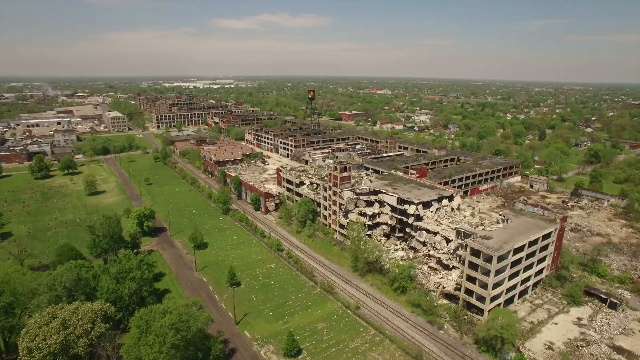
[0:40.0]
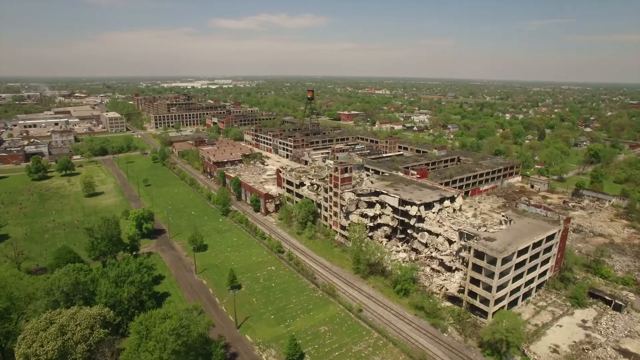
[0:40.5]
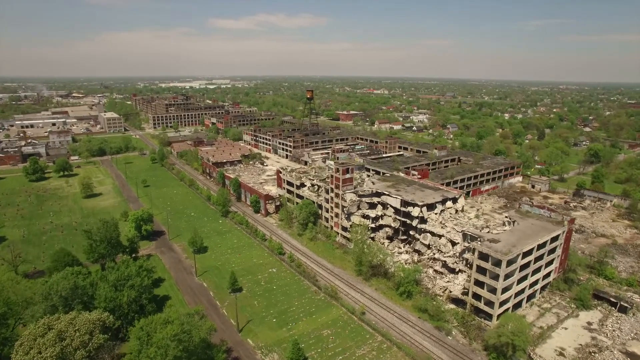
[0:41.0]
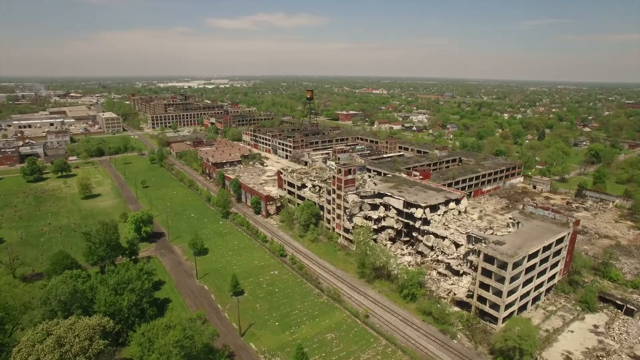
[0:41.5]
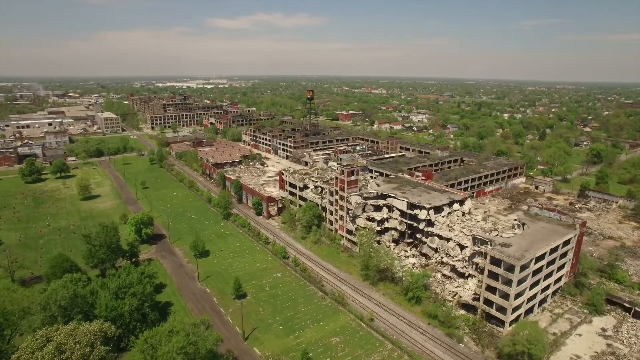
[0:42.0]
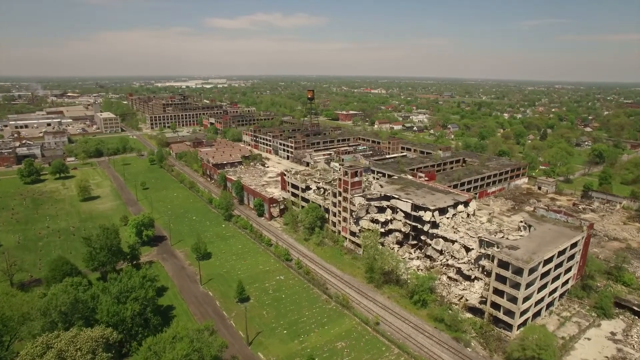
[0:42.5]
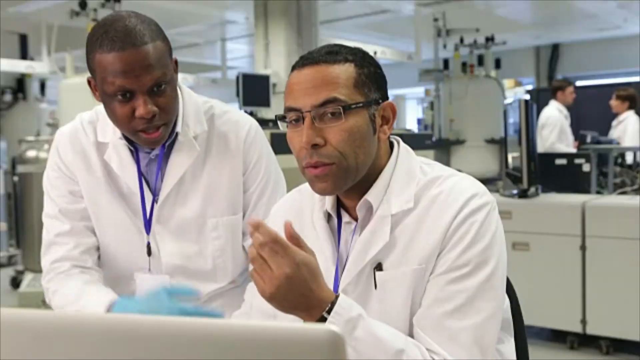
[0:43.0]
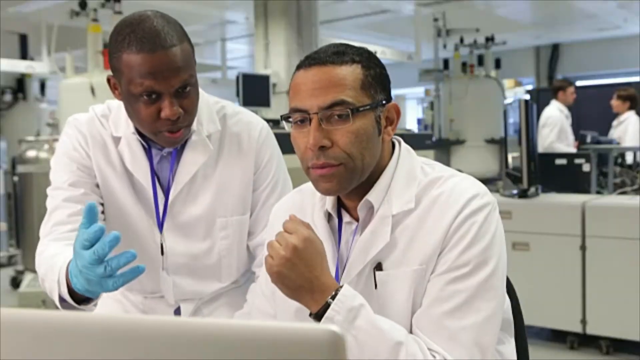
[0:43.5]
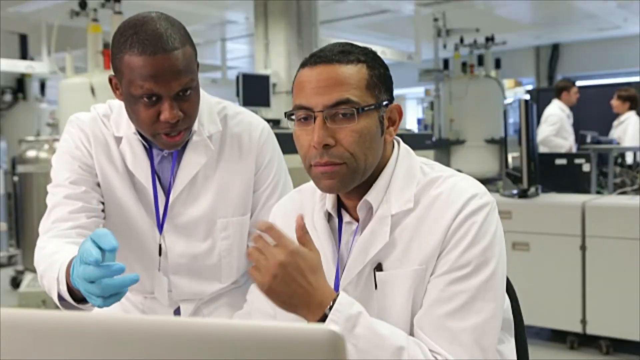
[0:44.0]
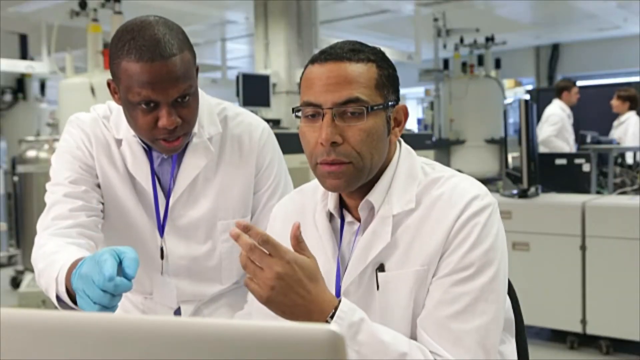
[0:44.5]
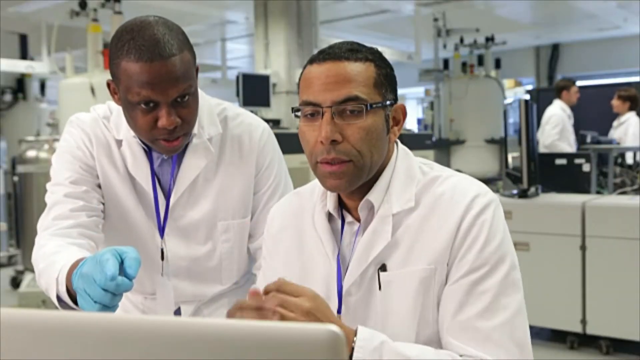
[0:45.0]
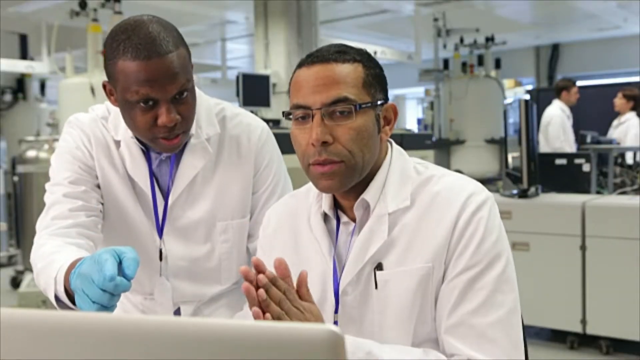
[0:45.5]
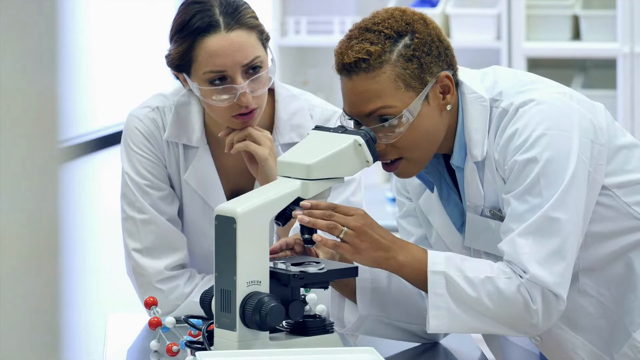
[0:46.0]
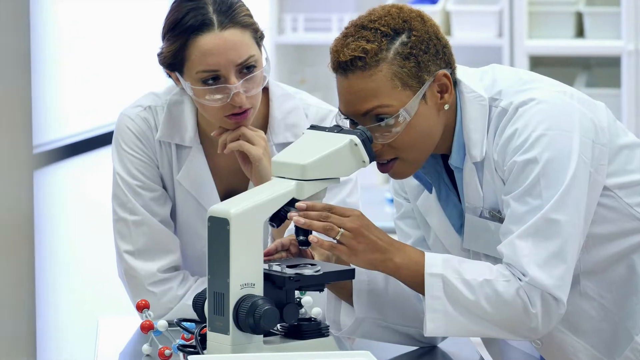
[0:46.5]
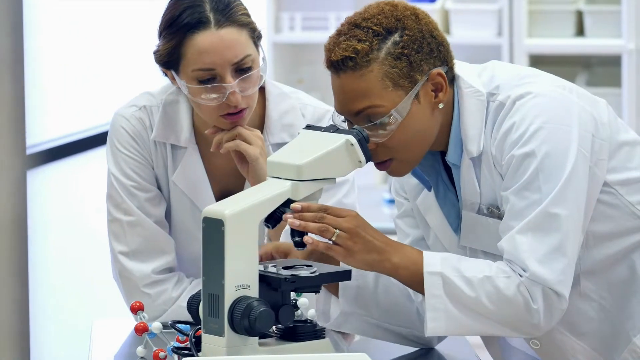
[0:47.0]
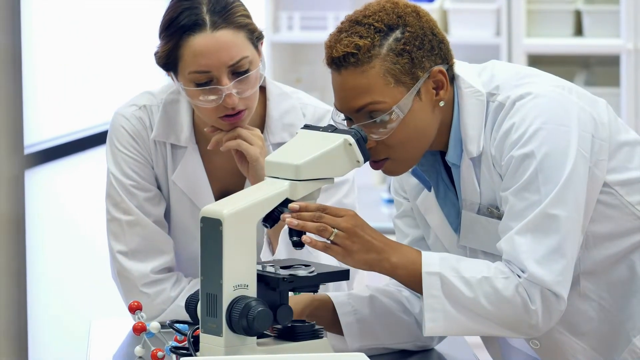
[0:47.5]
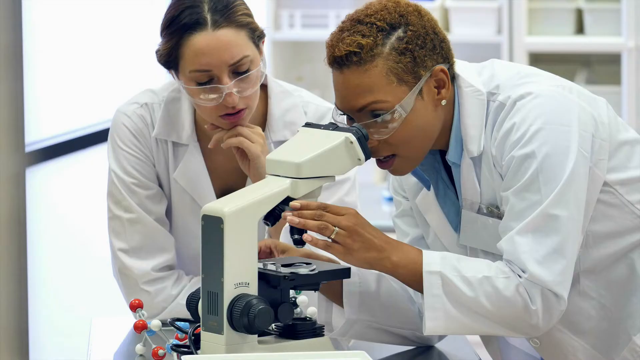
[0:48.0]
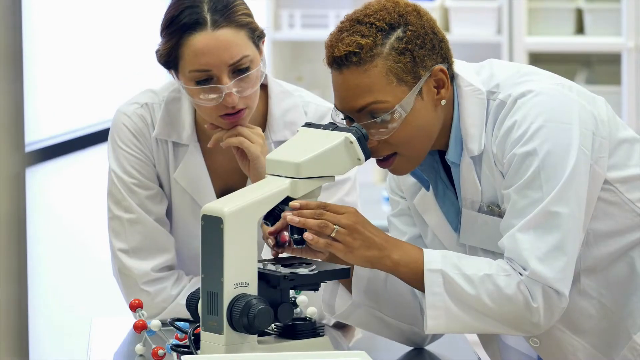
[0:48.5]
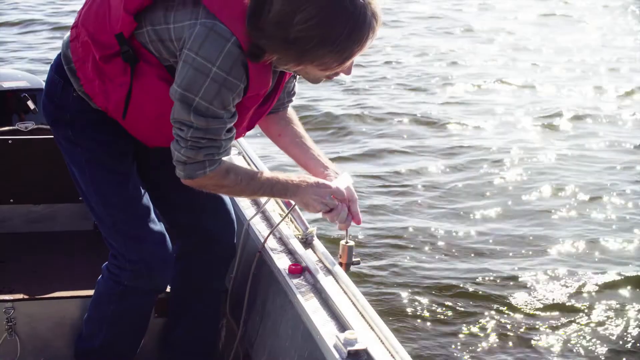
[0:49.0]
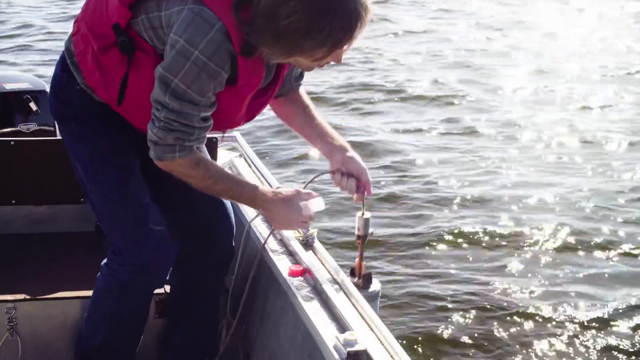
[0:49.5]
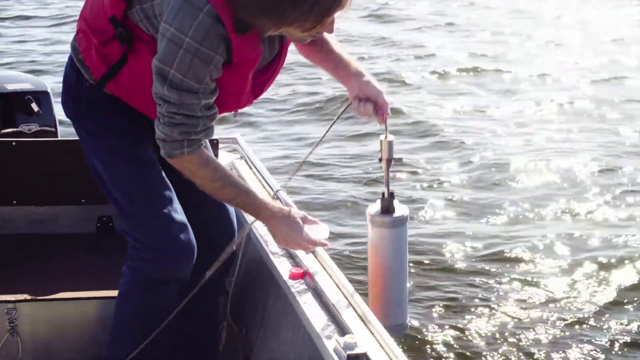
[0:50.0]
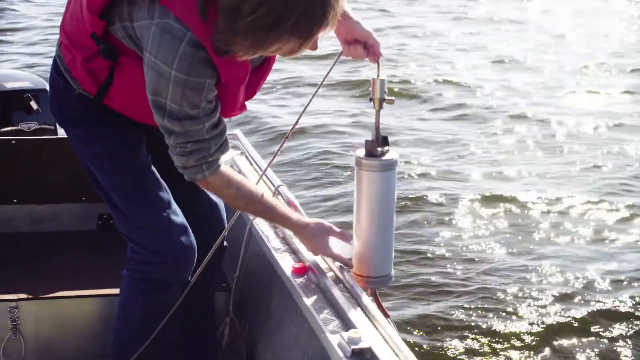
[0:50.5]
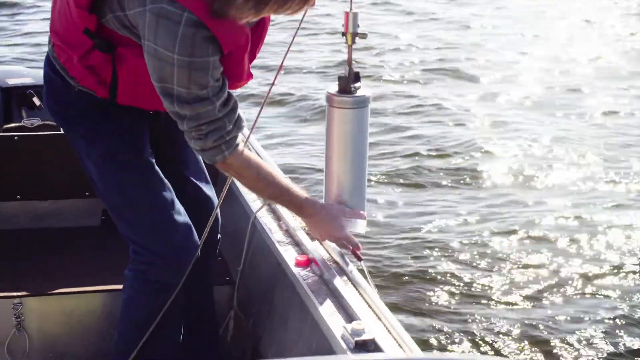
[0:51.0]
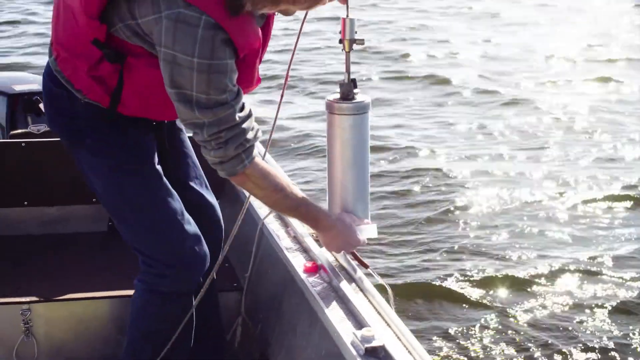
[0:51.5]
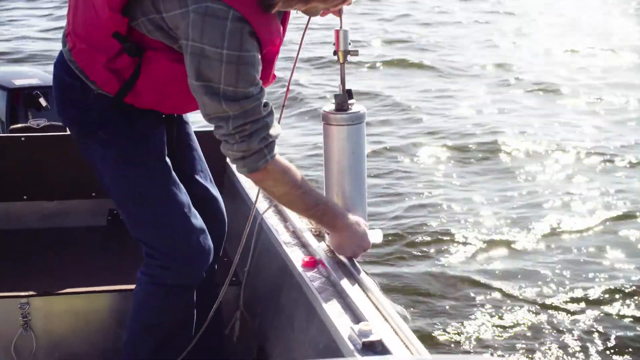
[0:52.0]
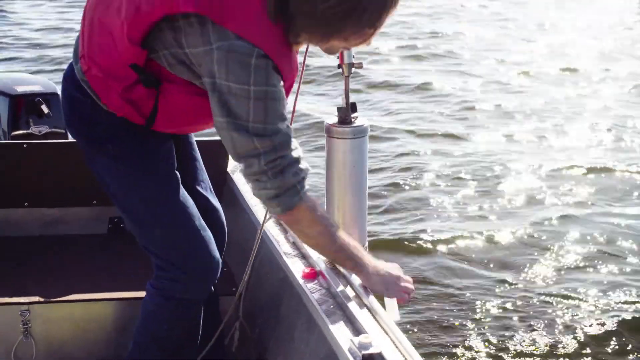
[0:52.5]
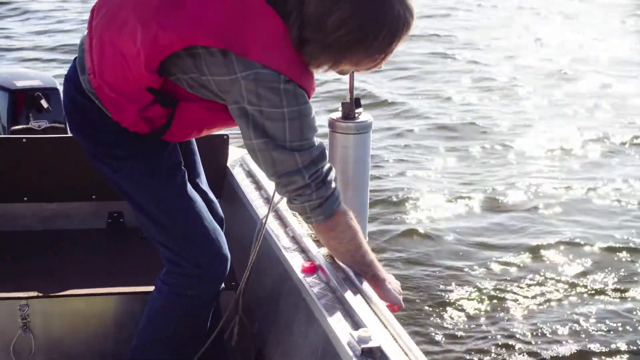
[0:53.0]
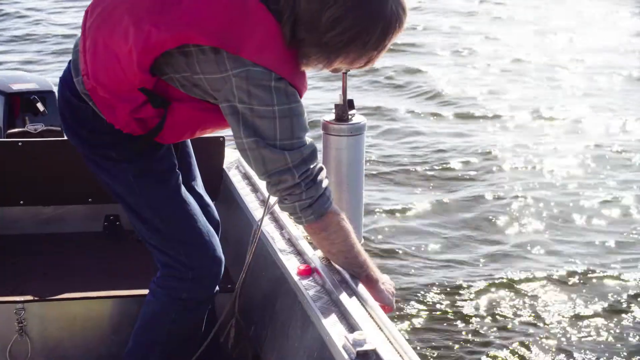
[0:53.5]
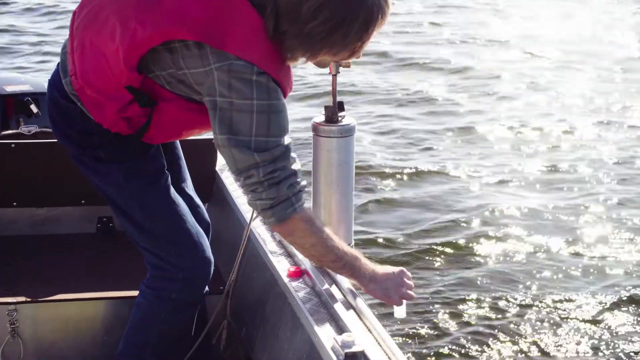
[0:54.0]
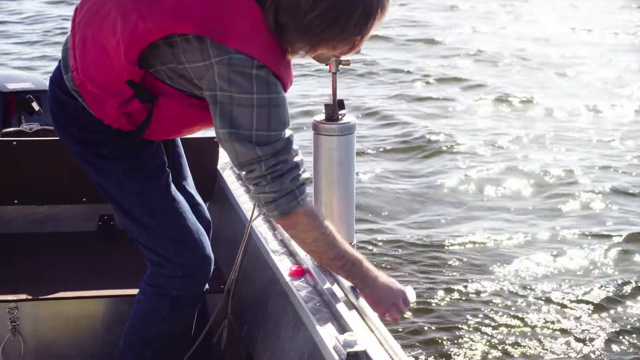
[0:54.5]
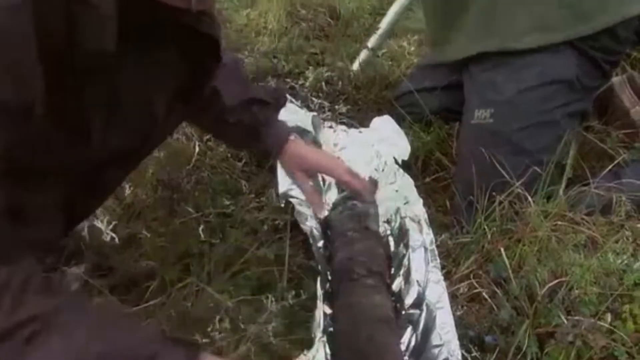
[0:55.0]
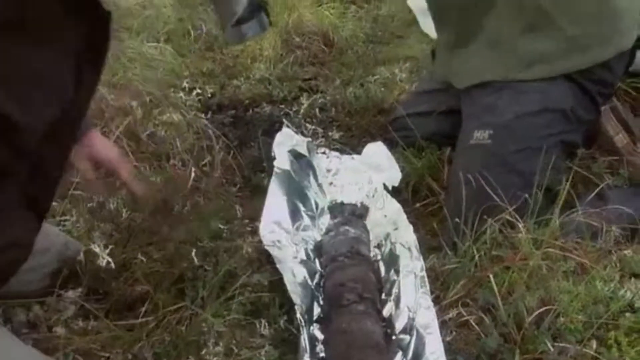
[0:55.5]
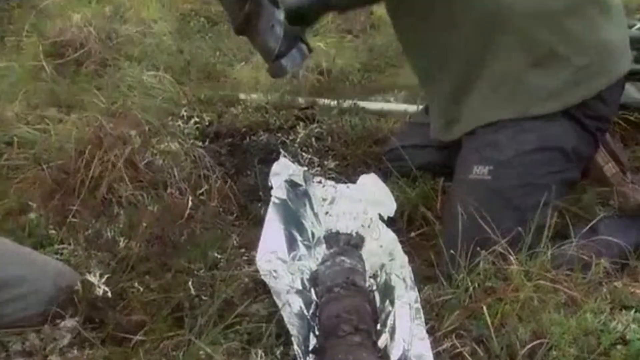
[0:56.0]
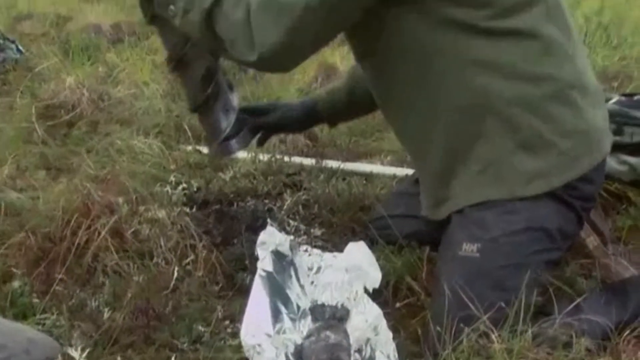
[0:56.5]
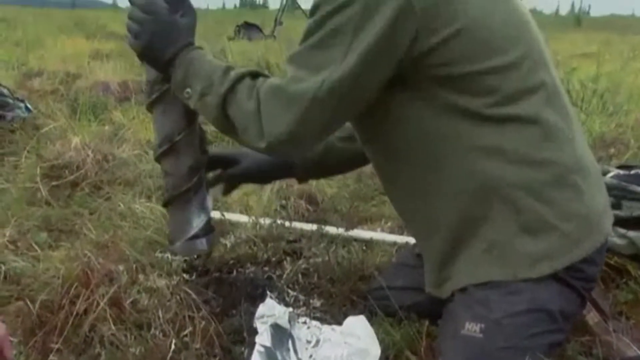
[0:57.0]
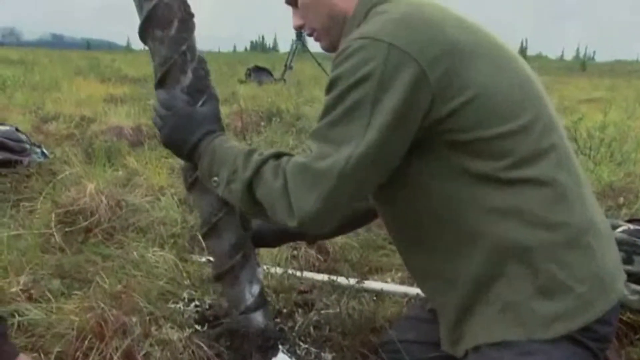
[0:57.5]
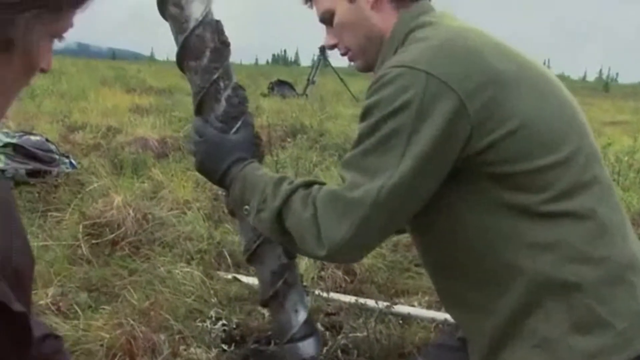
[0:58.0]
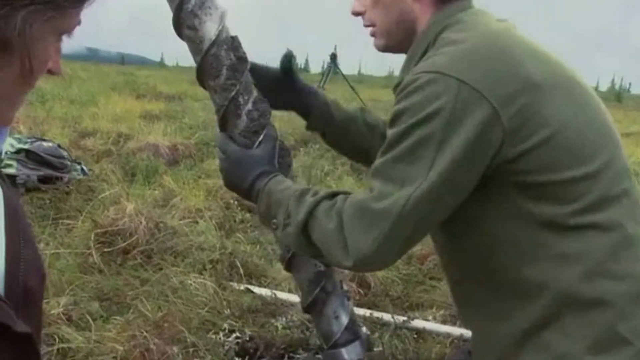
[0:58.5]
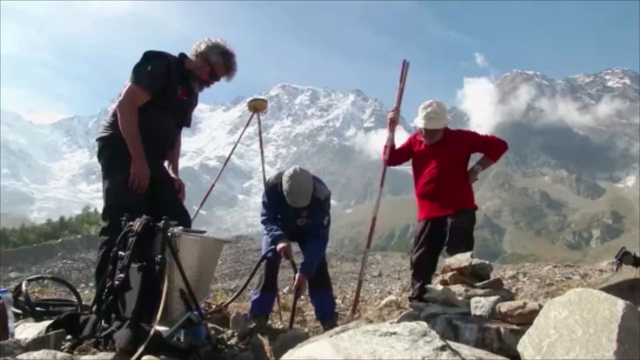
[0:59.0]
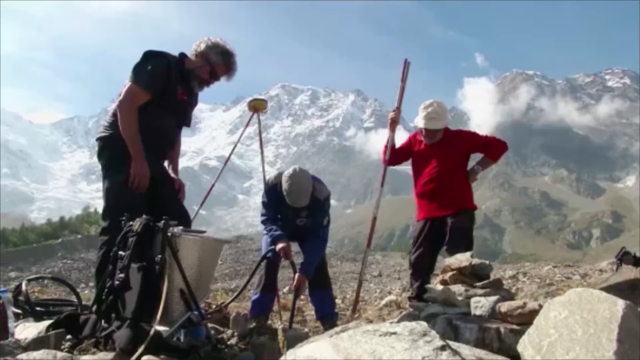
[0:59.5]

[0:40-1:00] An aerial view shows a line of buildings that appear to be decimated. The grass is green, with bushes and trees in the back. Next, two doctors in a lab setting appear to be conversing in front of a monitor. Then two more lab technicians or doctors, both female, wear white clear protective glasses; the person on the right is looking inside a telescope. A person wearing a red life vest and a flannel shirt then picks up a cylindrical apparatus from the ocean, apparently from a boat. The apparatus is connected to a wire, and the person lifts it out of the water with their left hand while, with their right hand, they seem to be grabbing water samples with a tube. Then people are digging with what looks like a large drill. A gentleman grips a large drill covered in mud from the grass, and it appears to be wrapped in foil. Another person is slightly off frame on the left.